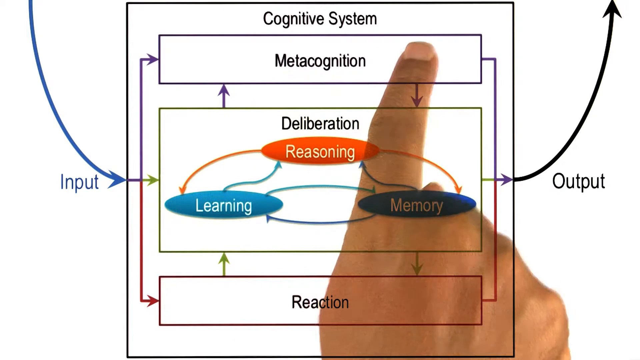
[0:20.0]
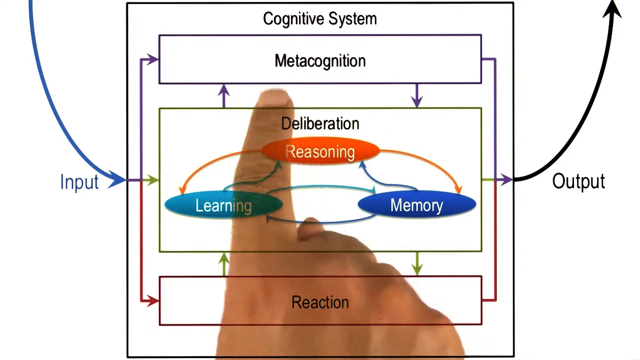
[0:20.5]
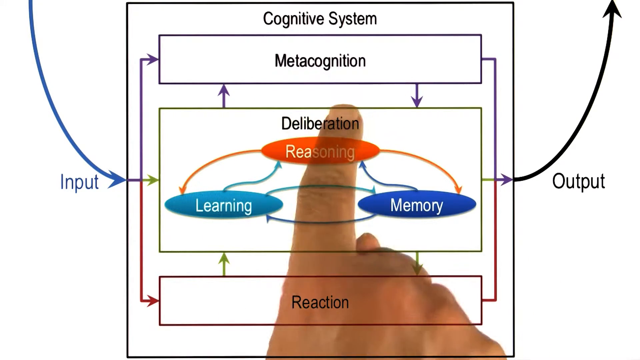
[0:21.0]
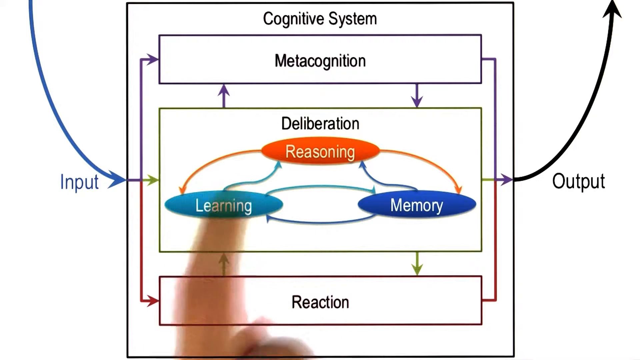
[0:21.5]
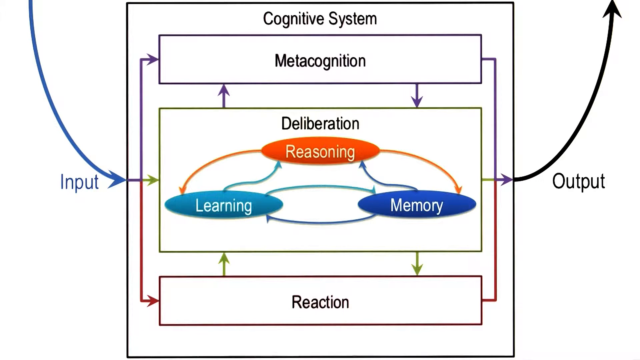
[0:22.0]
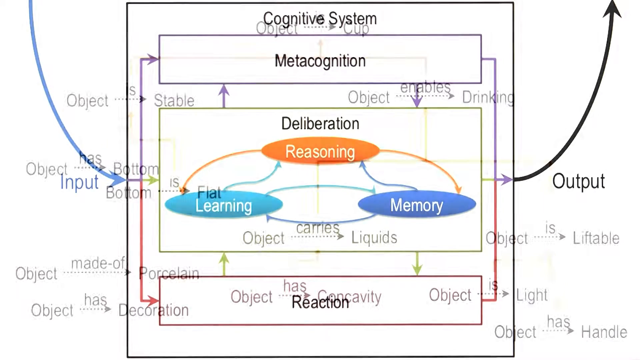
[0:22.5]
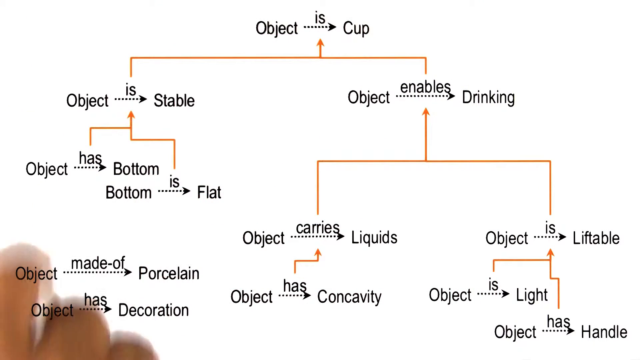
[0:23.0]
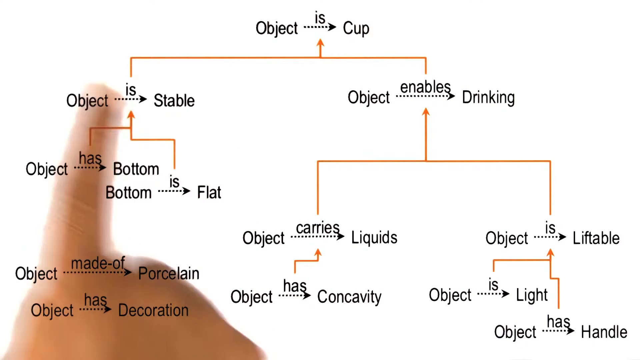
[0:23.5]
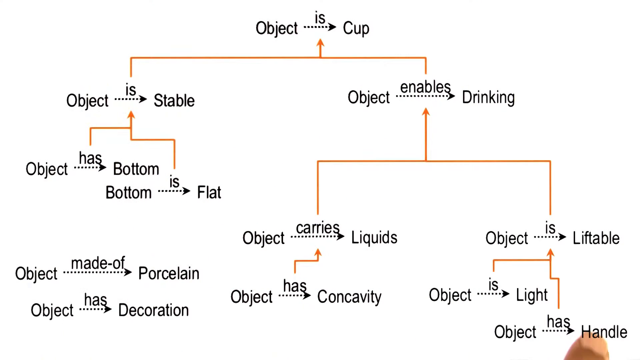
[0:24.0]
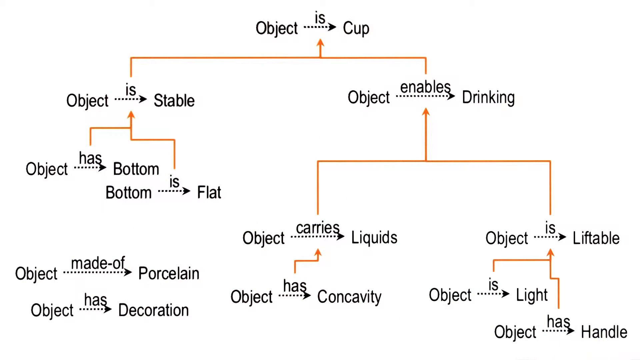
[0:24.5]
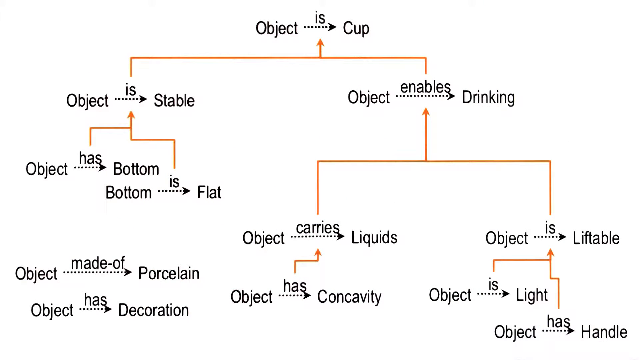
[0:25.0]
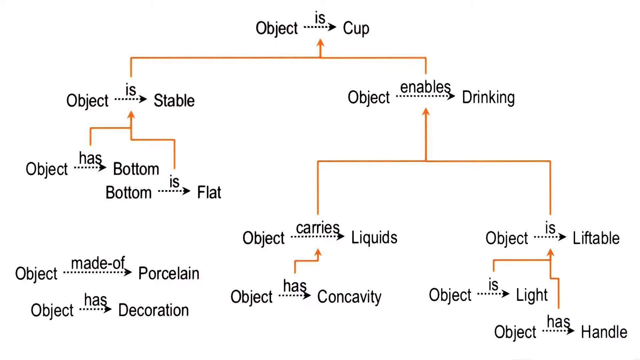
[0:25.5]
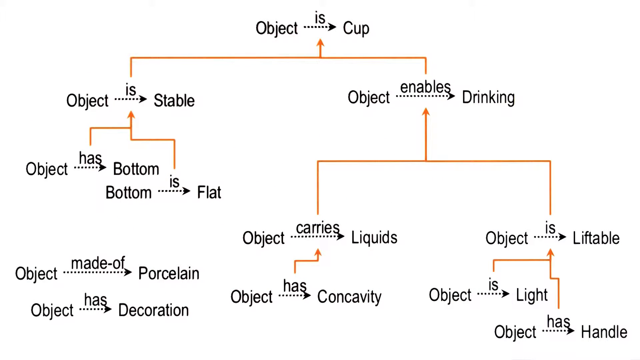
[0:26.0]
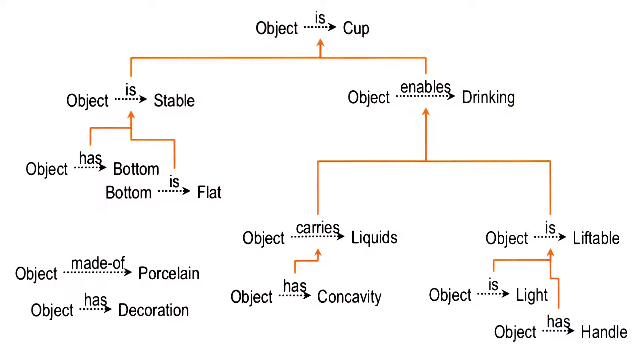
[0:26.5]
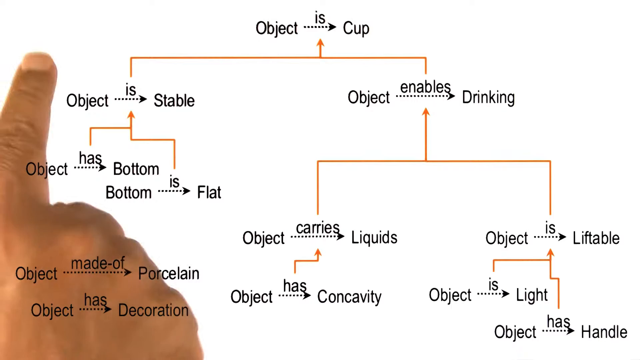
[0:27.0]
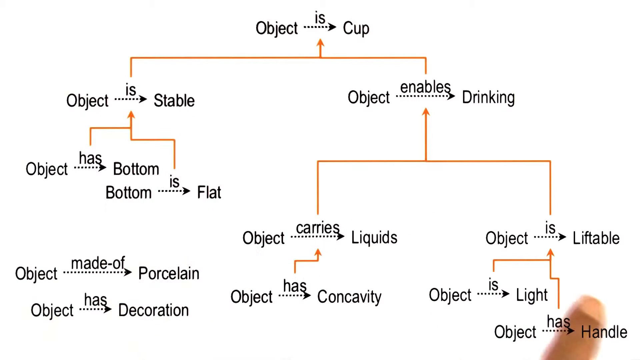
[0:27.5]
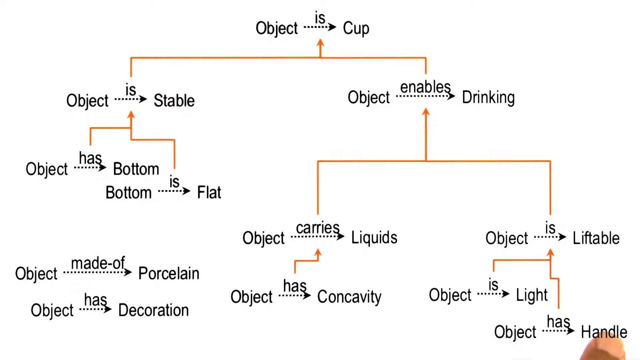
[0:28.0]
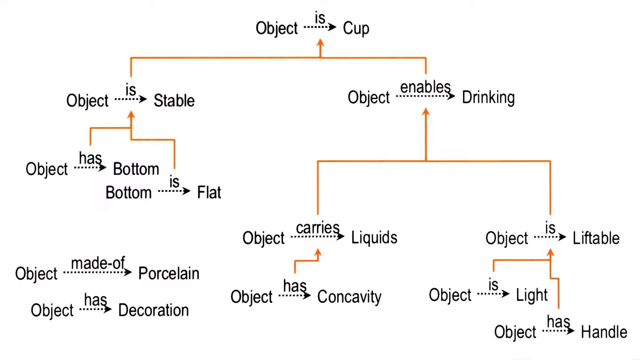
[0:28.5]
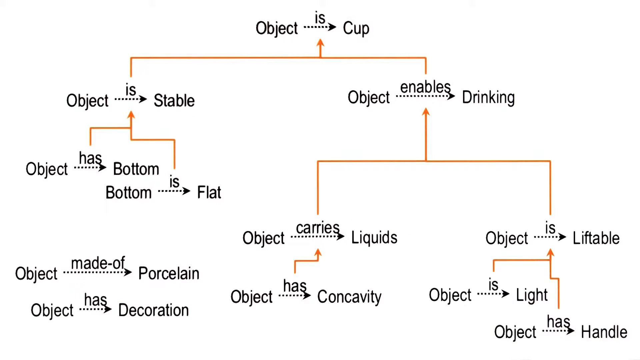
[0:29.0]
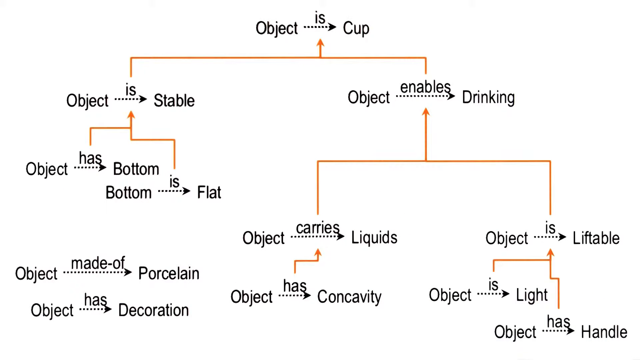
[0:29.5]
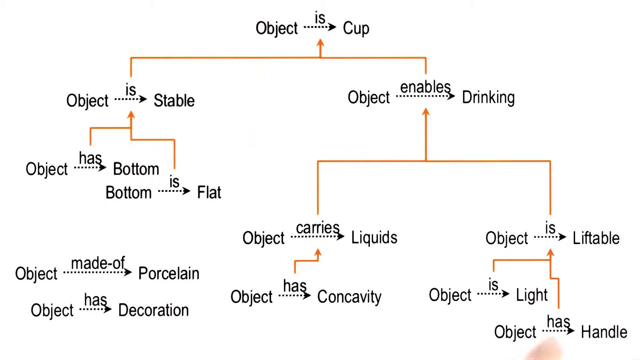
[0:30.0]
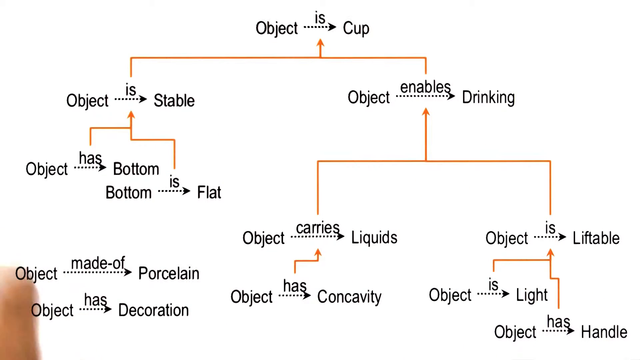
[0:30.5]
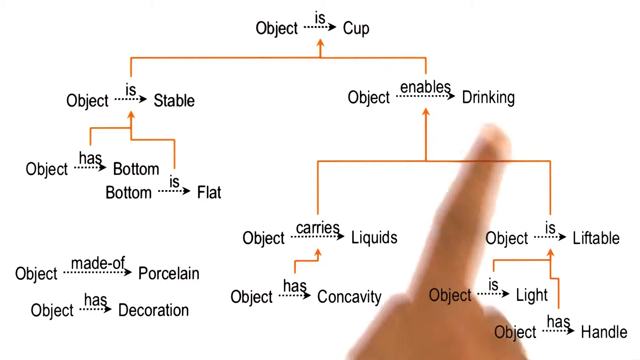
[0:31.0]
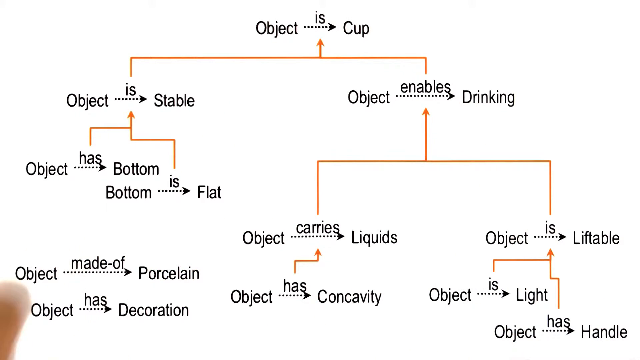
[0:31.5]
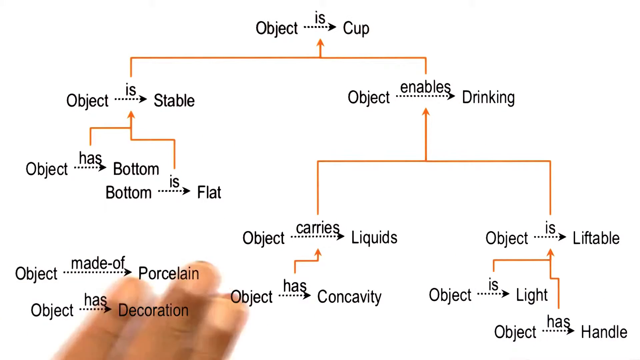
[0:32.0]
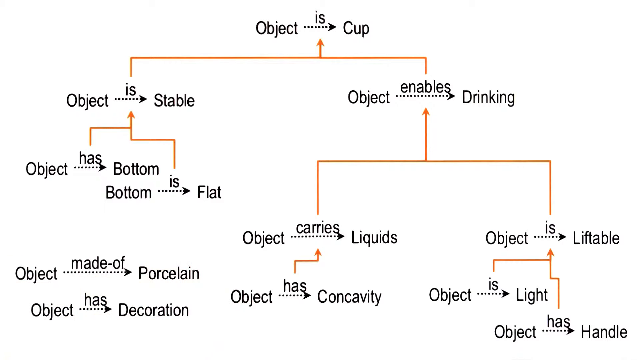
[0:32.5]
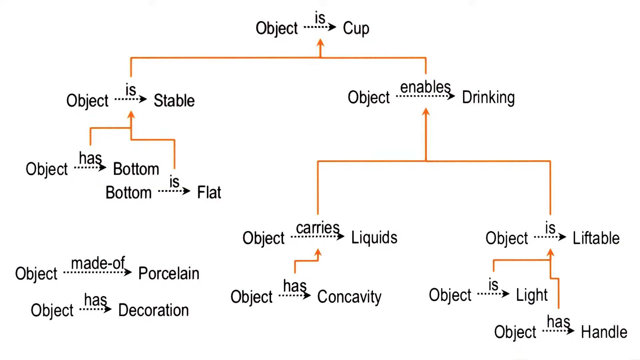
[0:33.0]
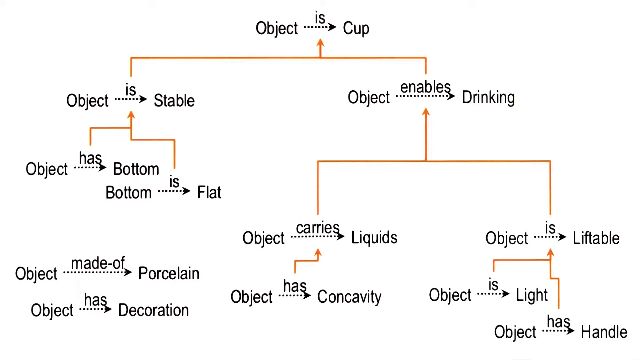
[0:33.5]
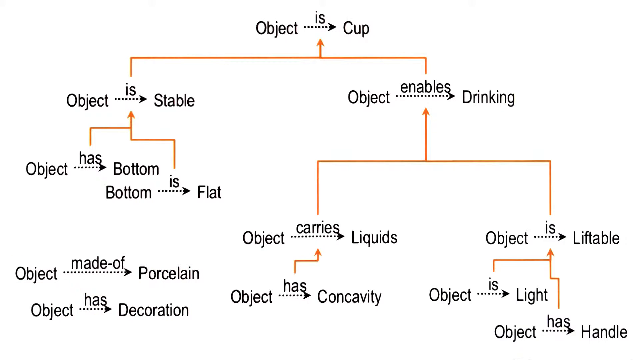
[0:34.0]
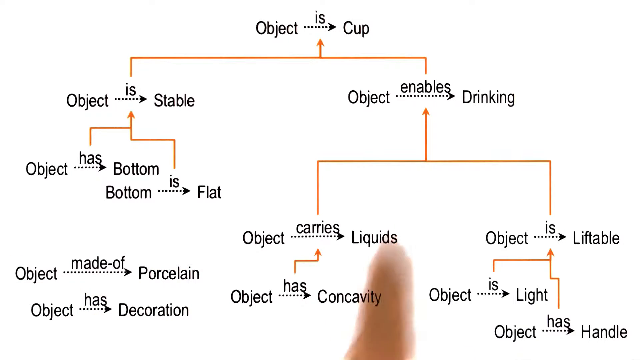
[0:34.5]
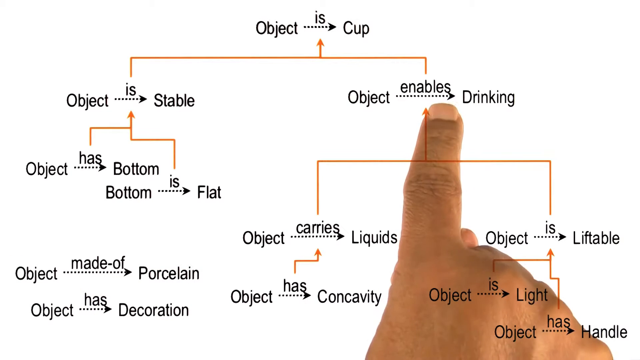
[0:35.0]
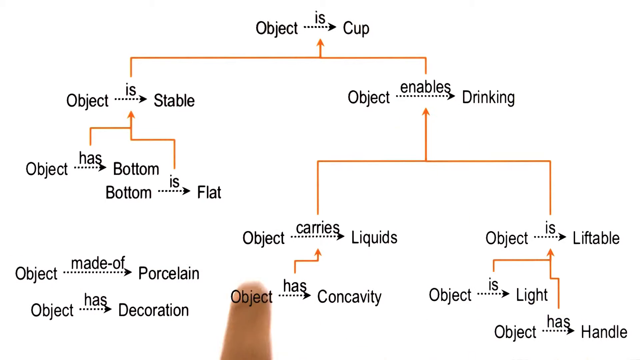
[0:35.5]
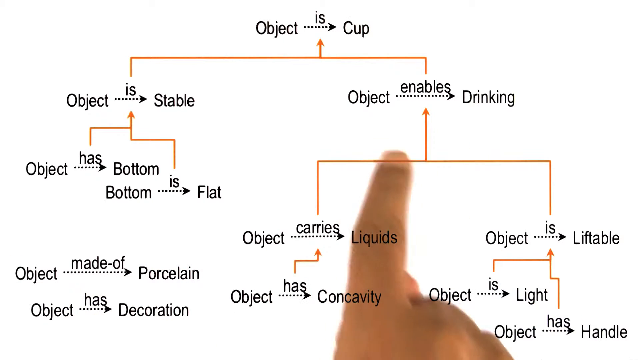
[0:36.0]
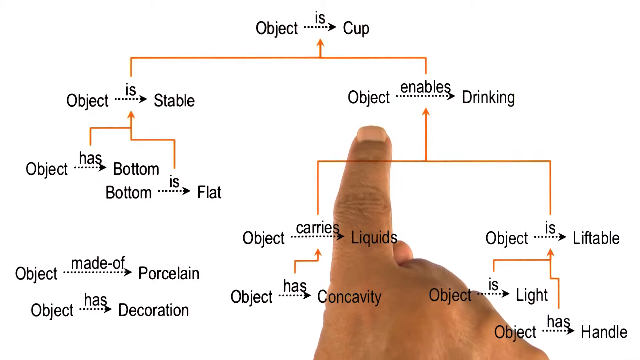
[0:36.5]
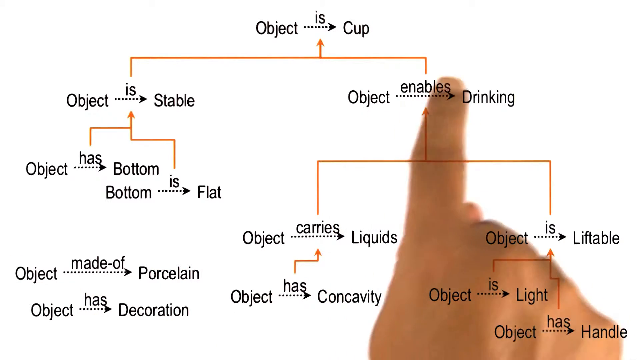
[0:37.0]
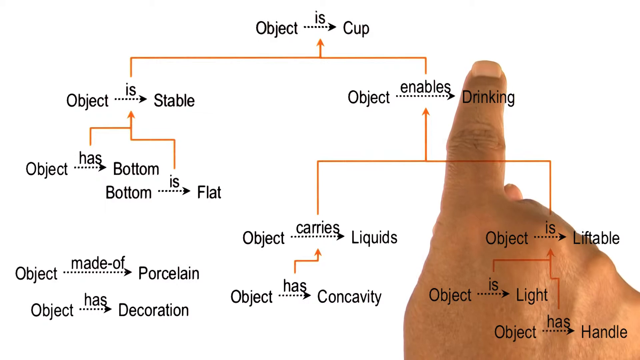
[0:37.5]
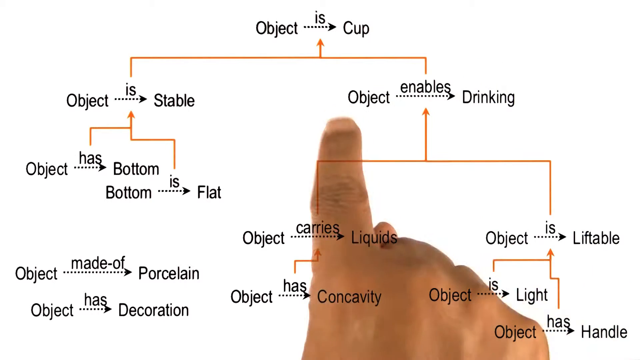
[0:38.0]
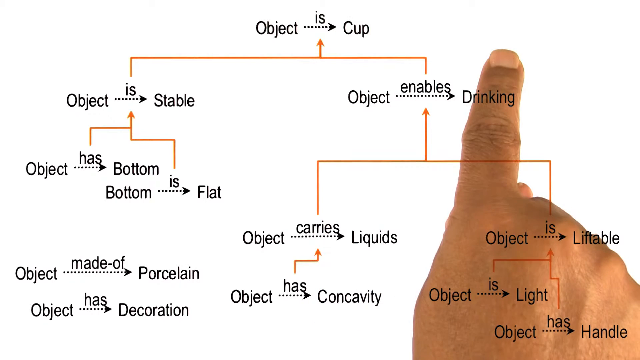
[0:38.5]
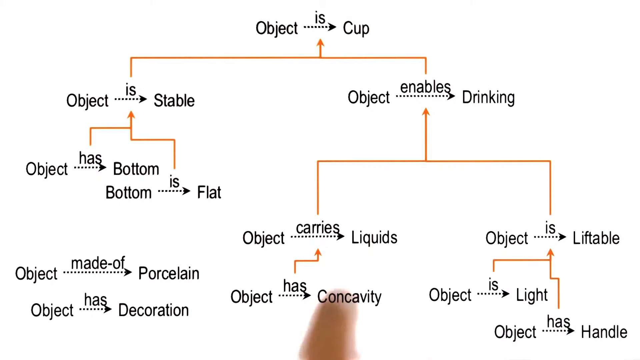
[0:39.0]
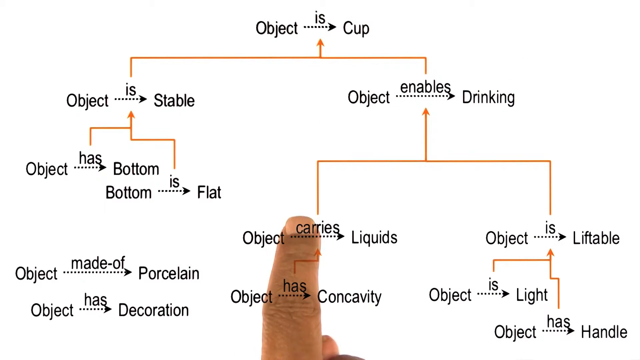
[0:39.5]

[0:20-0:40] The explanation of the graph of the cognition system, metacognition, deliberation and reaction continues, with a human right hand pointing to the wording on the graph. The presentation then moves to the next screen, where text reads "object is cup", with an orange arrow pointing to "object is stable and enabling drinking", along with "the object has bottom is flat", "object carries liquids", "object is liftable", "the object is made of porcelain", "object has decoration" and "object is light". The hand points at the wording here, at the object enabling drinking portion, and orange arrows point from one angle to another. The picture quality is good.